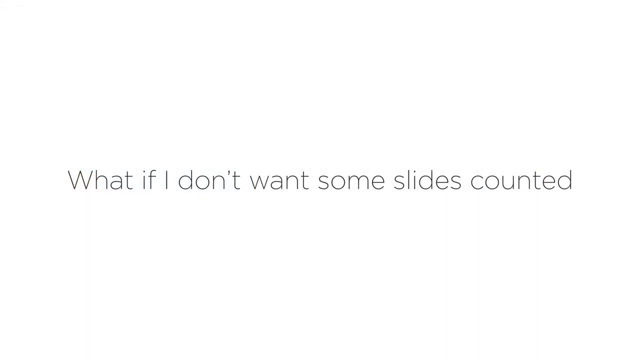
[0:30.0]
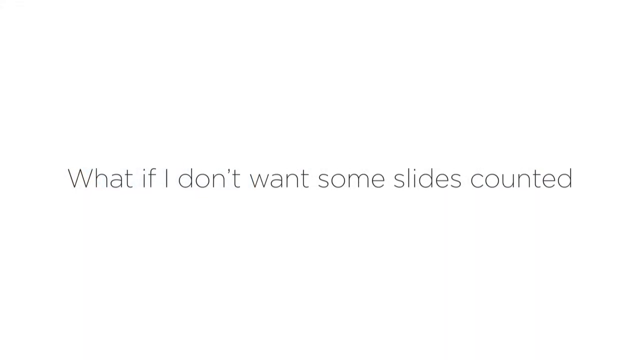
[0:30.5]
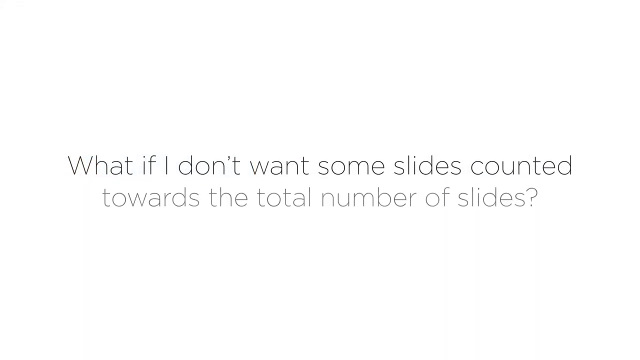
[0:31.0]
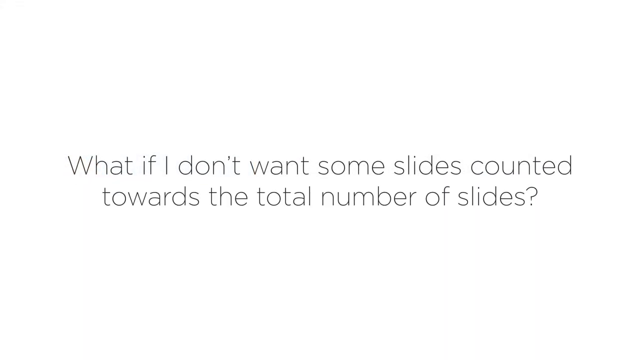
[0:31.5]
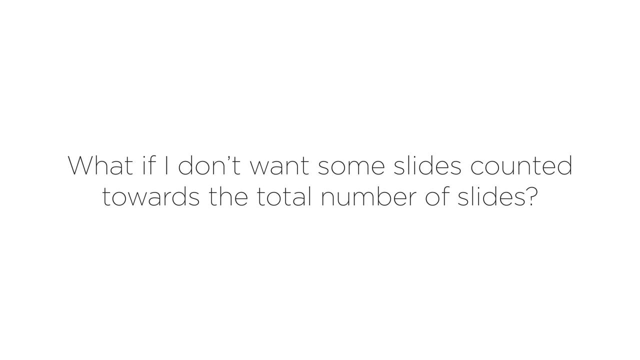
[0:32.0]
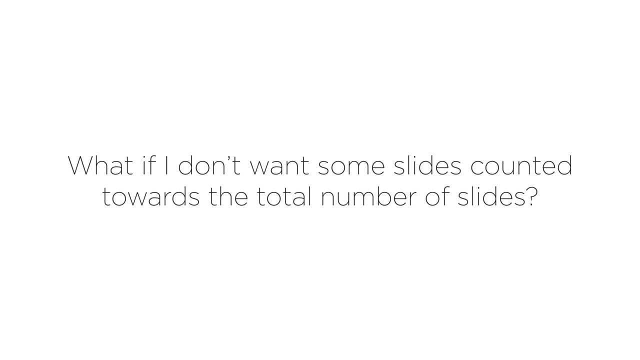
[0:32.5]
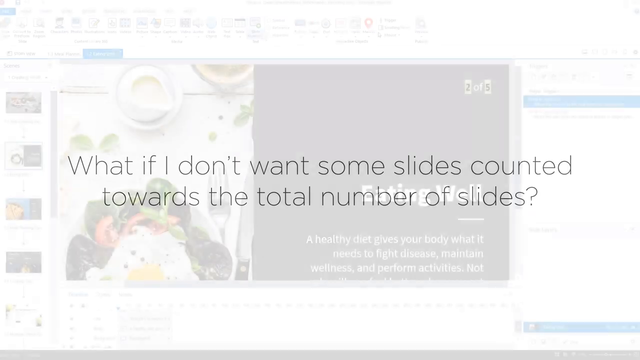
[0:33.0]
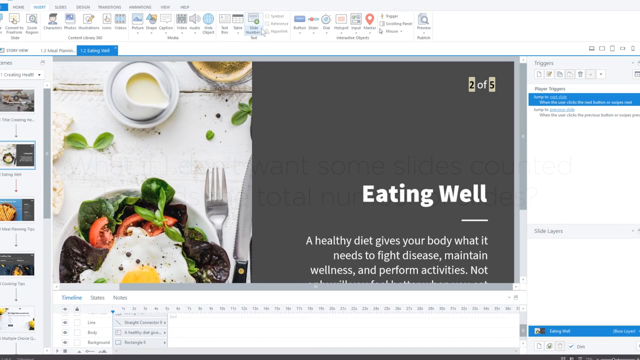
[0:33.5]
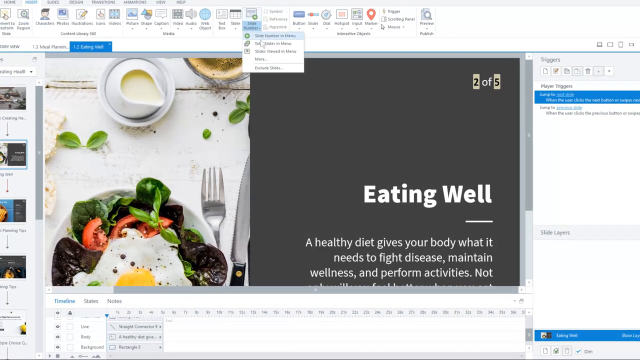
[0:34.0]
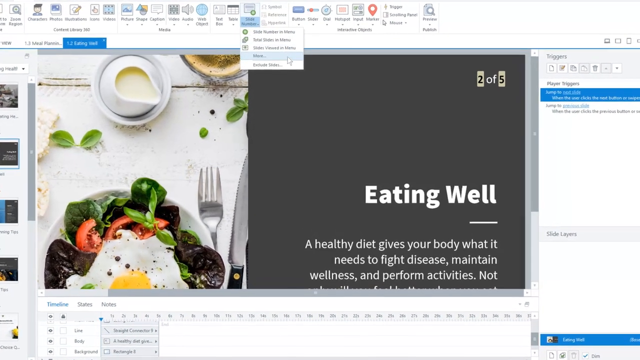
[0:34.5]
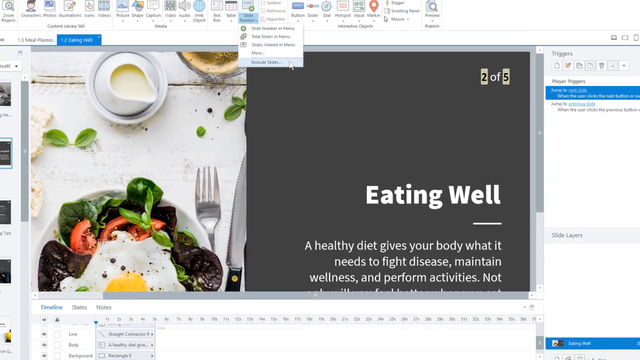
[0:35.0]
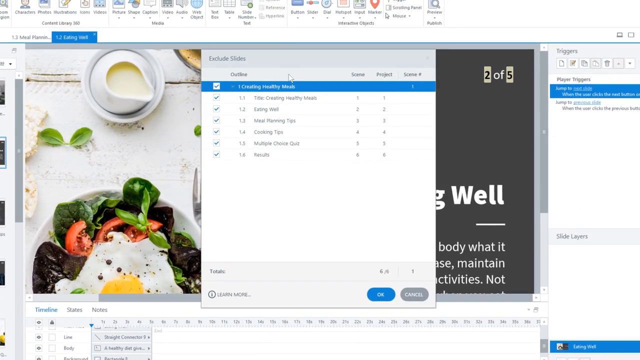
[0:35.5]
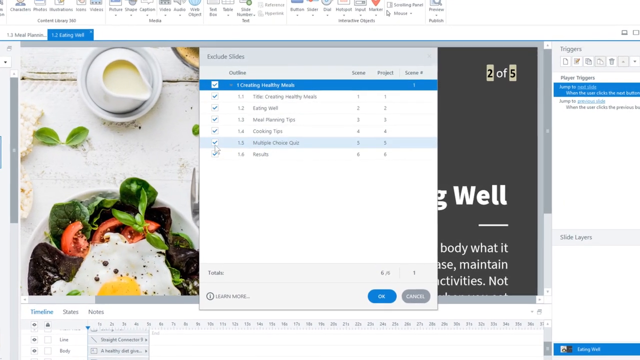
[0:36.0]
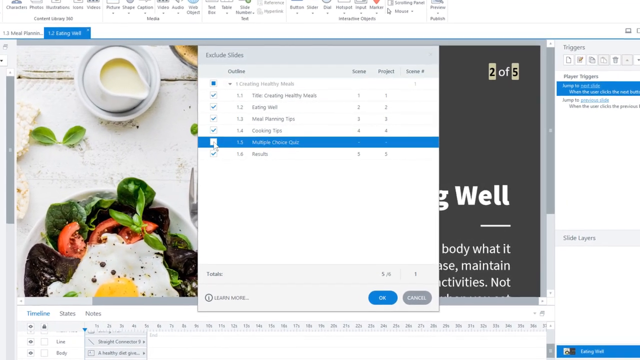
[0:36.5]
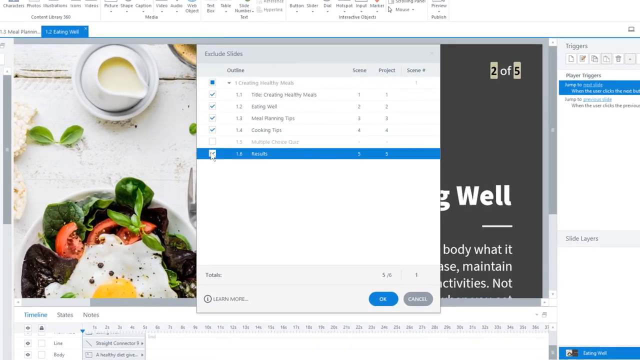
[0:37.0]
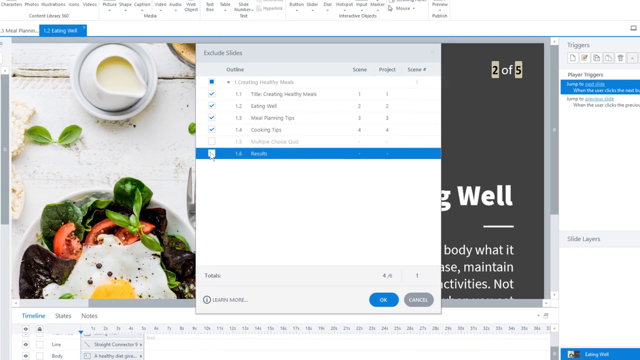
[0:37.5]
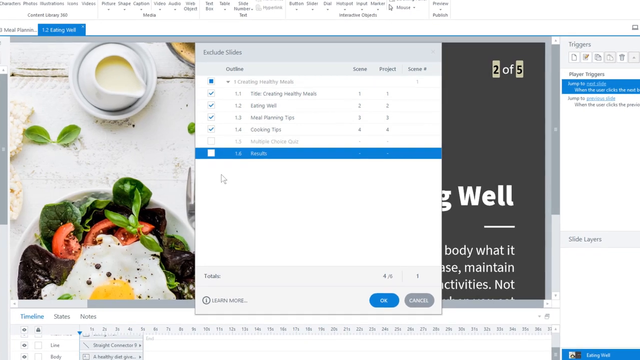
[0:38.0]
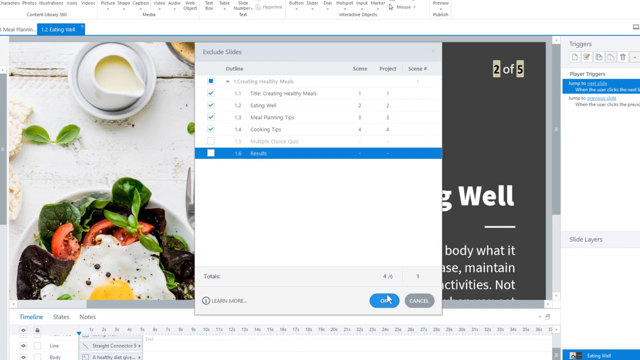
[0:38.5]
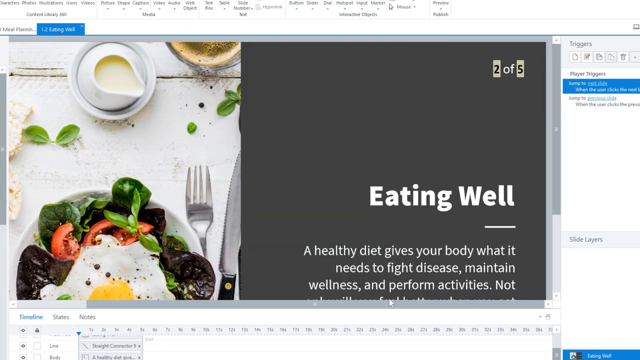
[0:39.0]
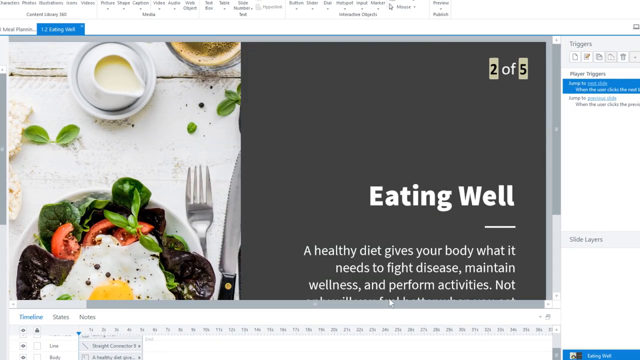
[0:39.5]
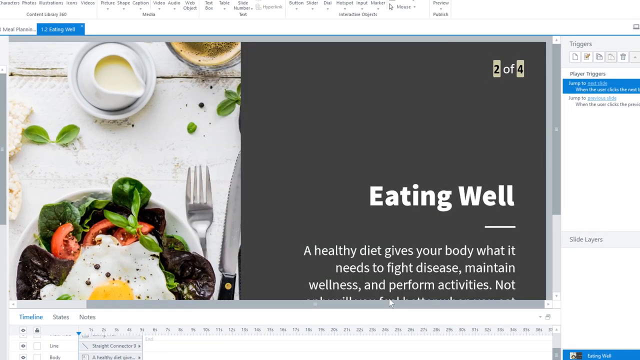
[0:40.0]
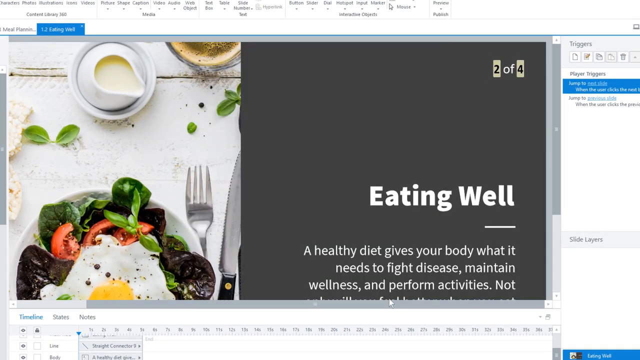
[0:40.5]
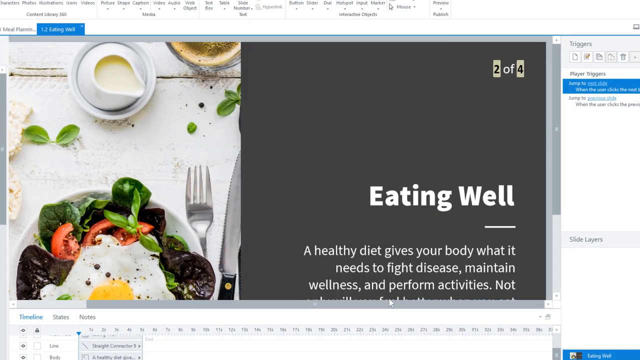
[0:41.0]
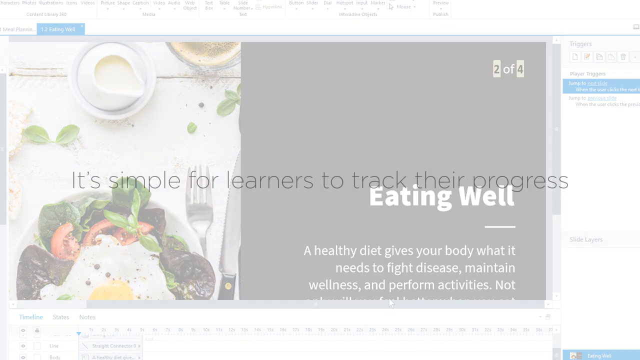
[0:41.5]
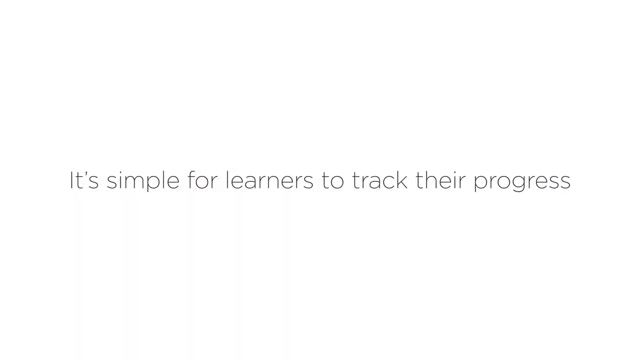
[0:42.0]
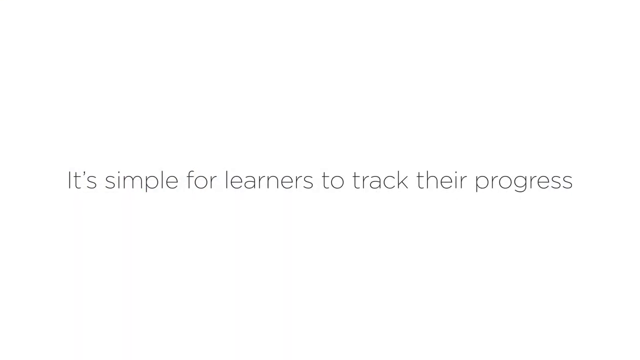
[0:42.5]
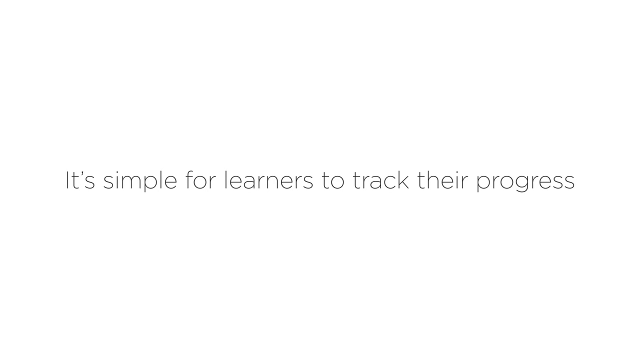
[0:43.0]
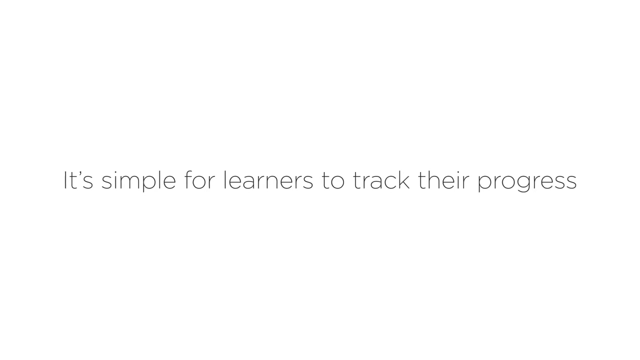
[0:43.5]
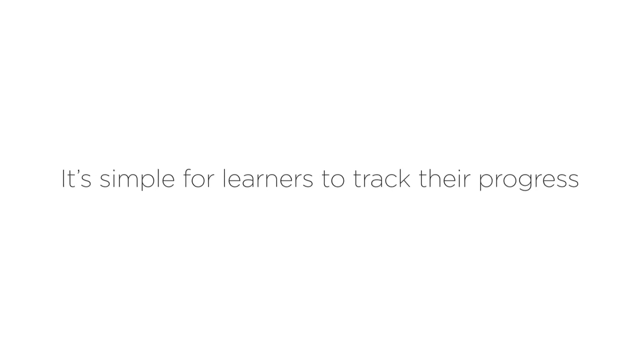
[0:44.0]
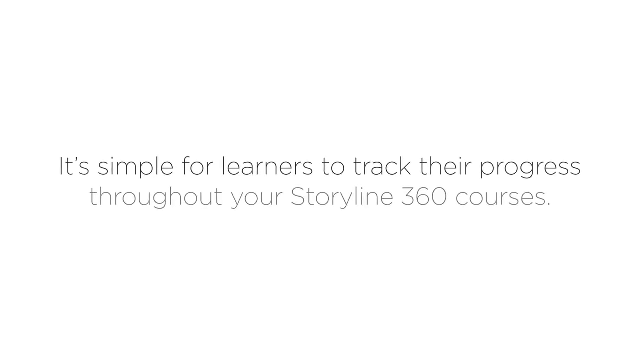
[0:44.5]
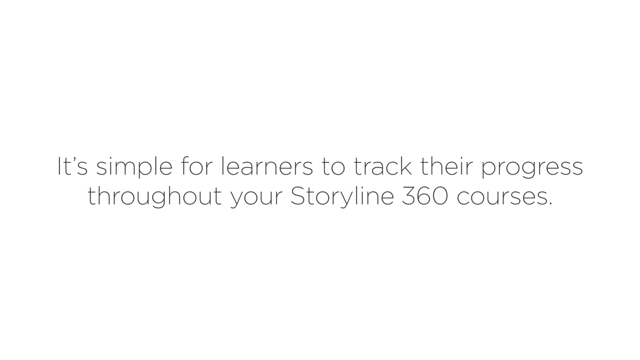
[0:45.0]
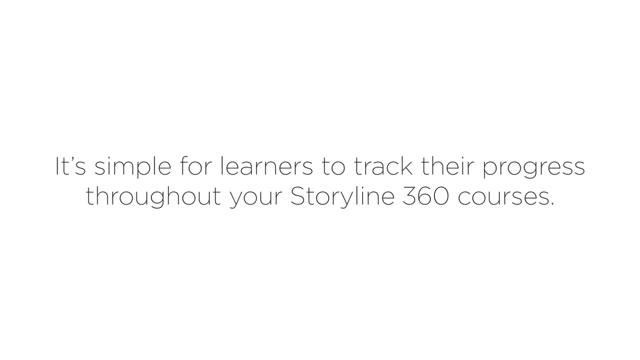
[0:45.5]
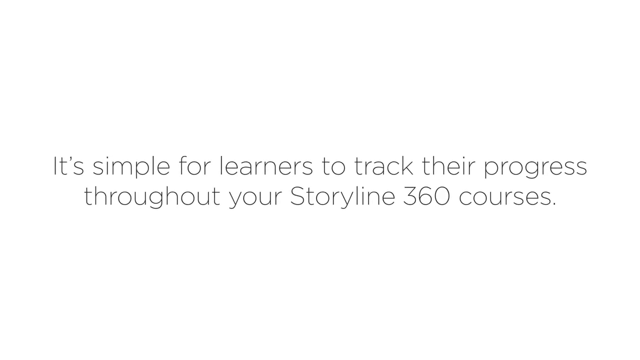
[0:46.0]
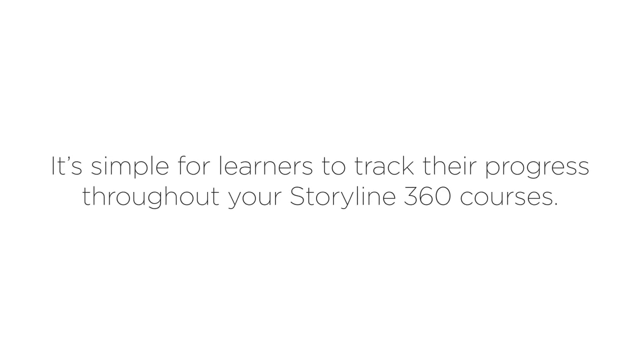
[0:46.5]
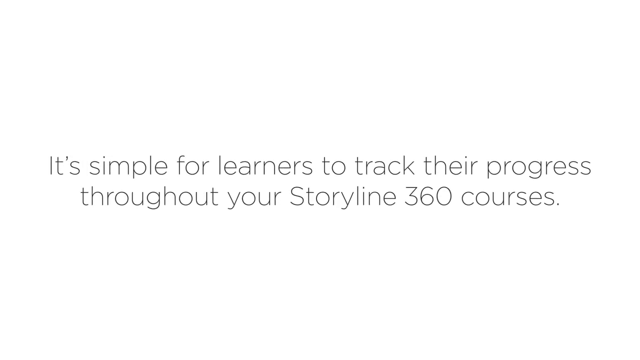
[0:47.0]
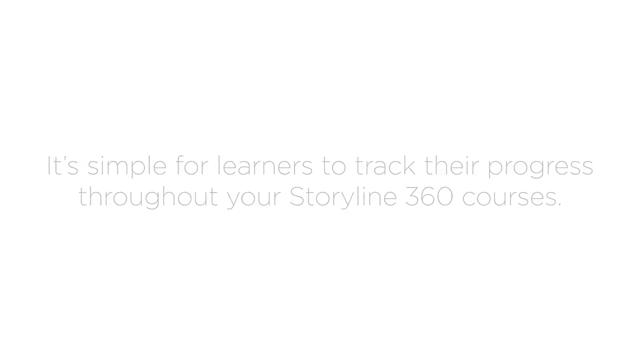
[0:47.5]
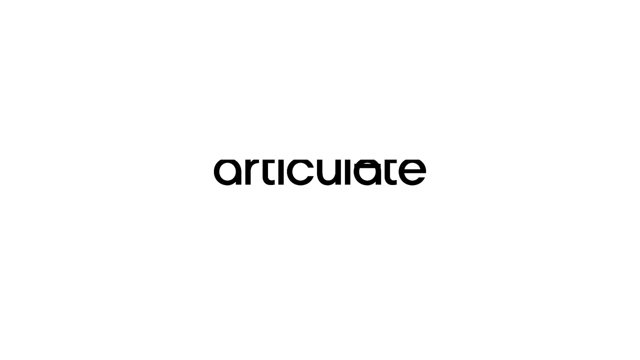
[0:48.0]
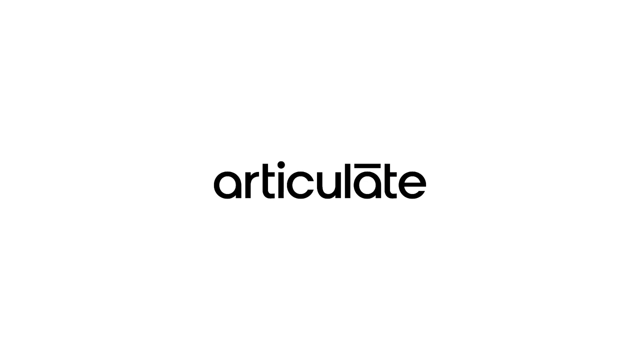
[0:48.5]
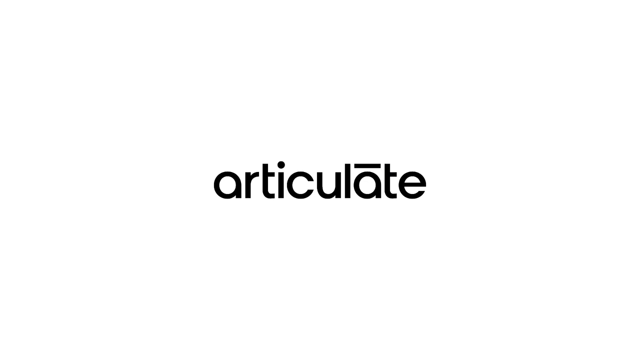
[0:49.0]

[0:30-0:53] Black text reads "what if I don't want some slides counted towards the number of the slides". The user changes the options for numbering the slides and turns off the numbering. While doing this they are on the eating well slide of the visual menu, which contains the picture of the egg. The user goes through the settings of the visual menu and excludes the last two slides from the numbering, so the menu has six slides but only the first four are numbered. The image then cuts to a white background with black text that says "it's simple for learners to track their progress throughout your Storyline 360 courses".